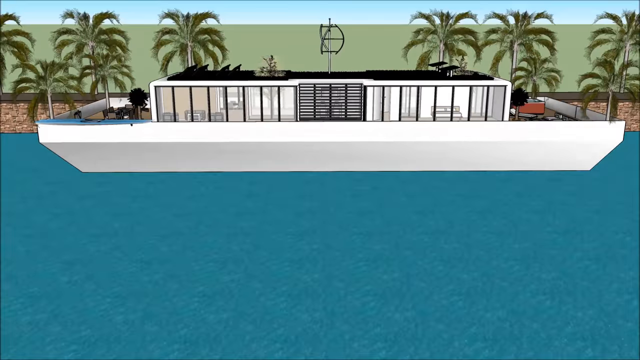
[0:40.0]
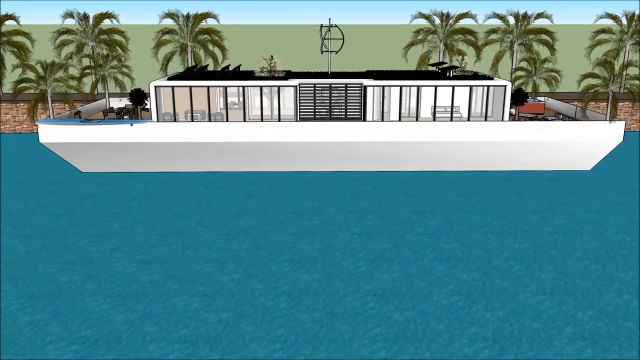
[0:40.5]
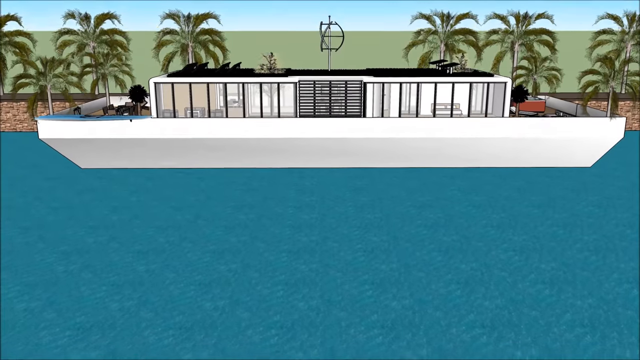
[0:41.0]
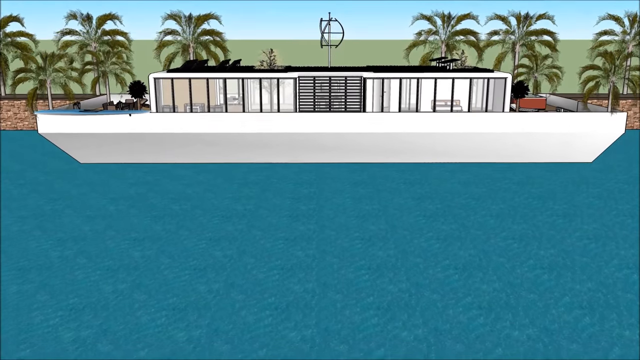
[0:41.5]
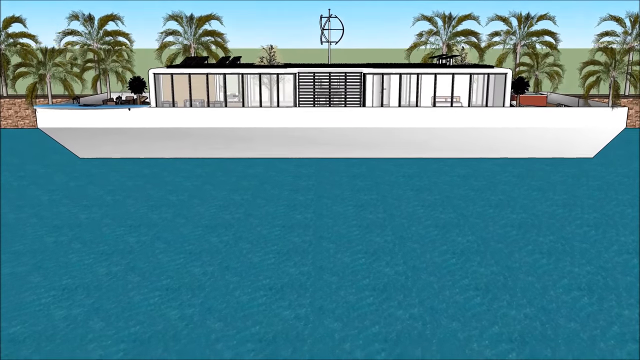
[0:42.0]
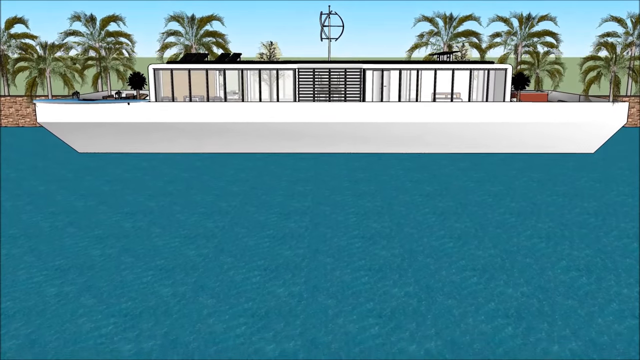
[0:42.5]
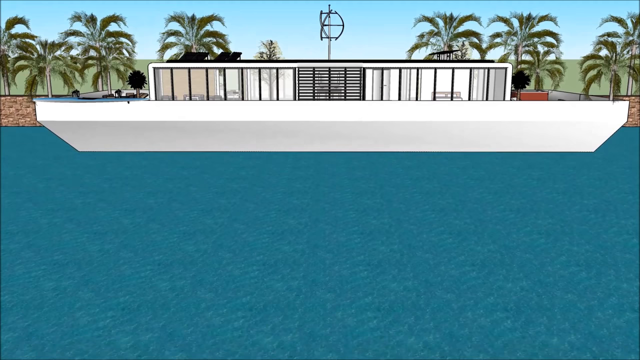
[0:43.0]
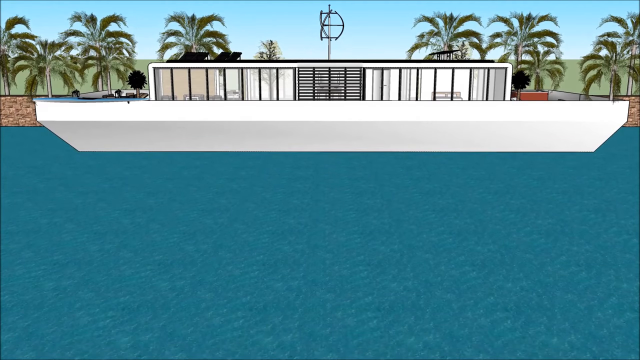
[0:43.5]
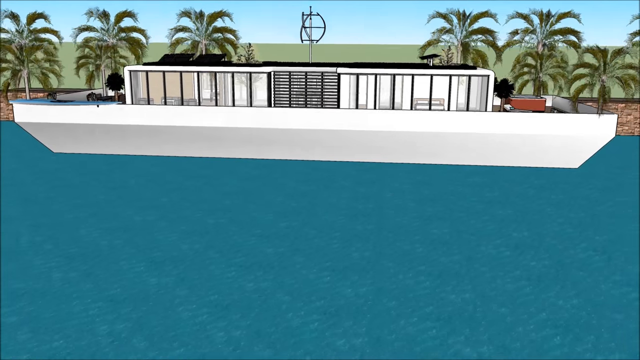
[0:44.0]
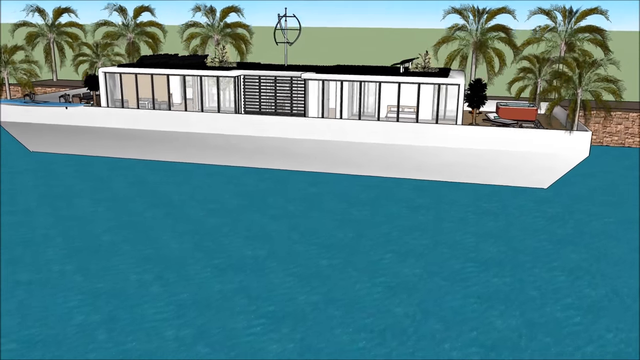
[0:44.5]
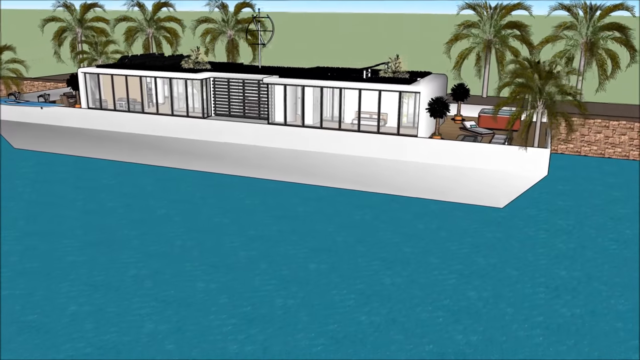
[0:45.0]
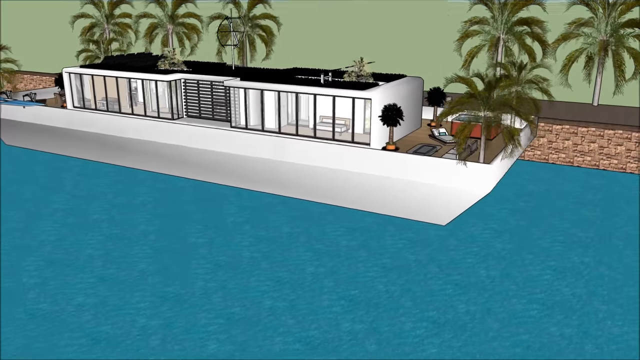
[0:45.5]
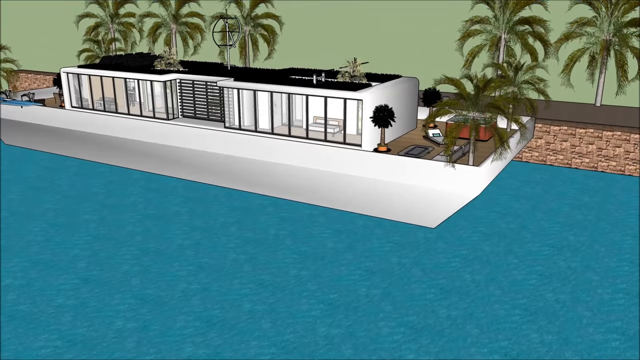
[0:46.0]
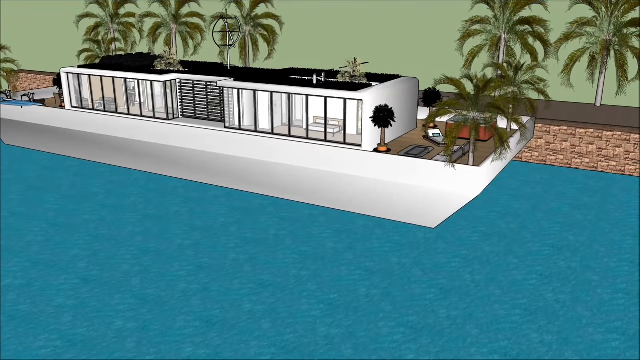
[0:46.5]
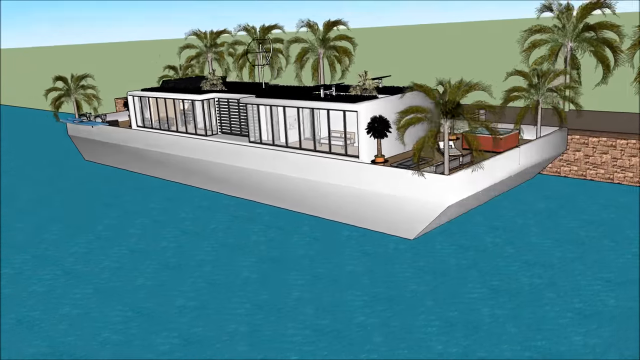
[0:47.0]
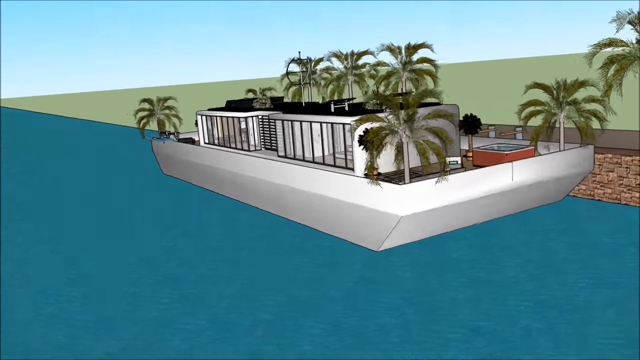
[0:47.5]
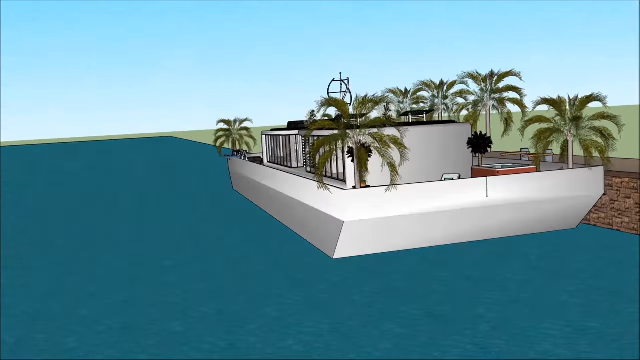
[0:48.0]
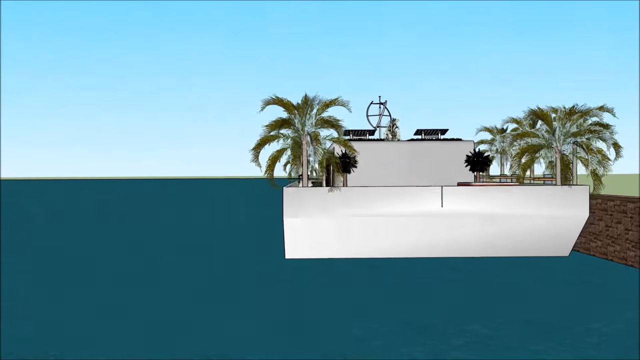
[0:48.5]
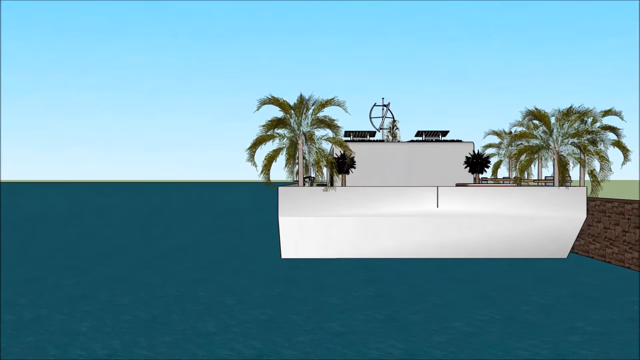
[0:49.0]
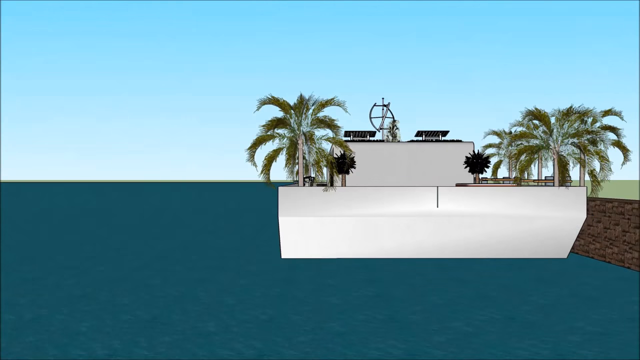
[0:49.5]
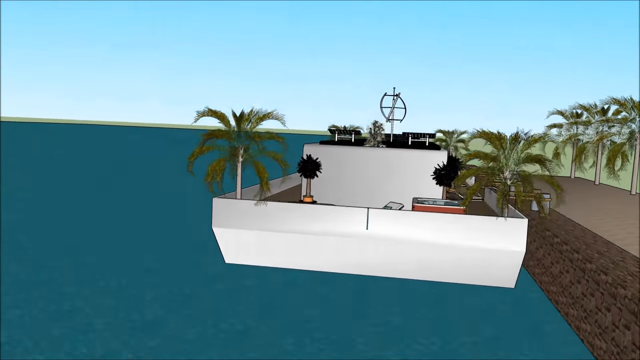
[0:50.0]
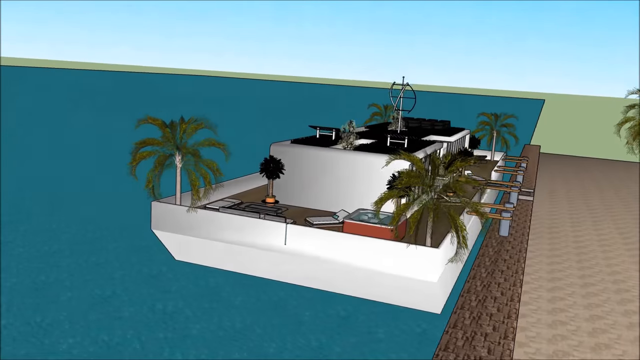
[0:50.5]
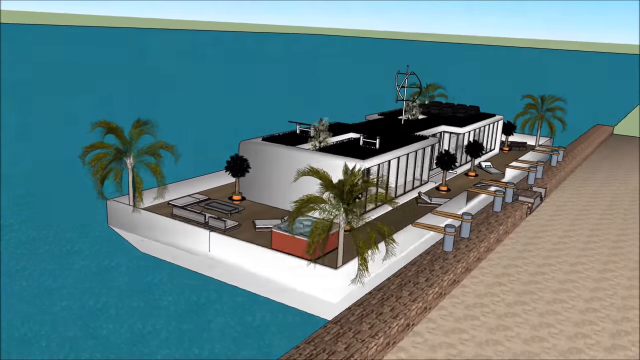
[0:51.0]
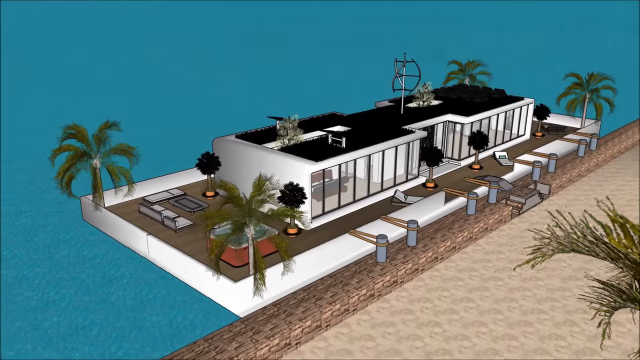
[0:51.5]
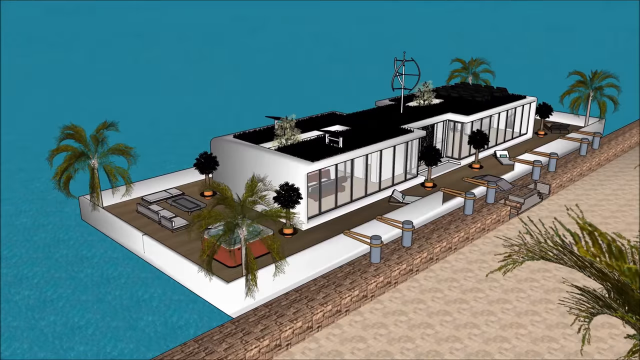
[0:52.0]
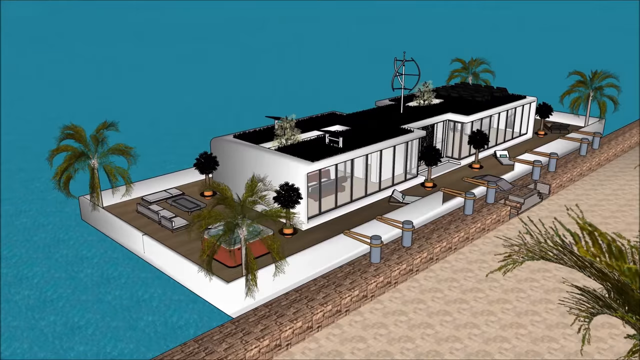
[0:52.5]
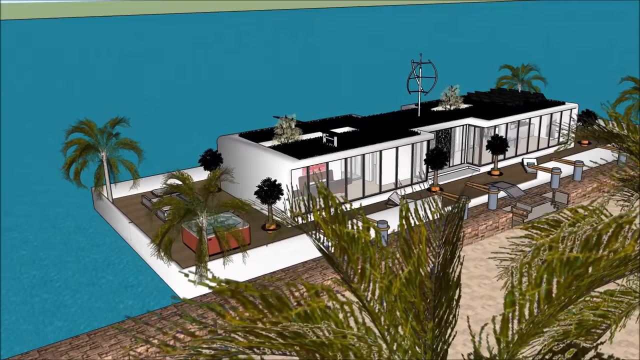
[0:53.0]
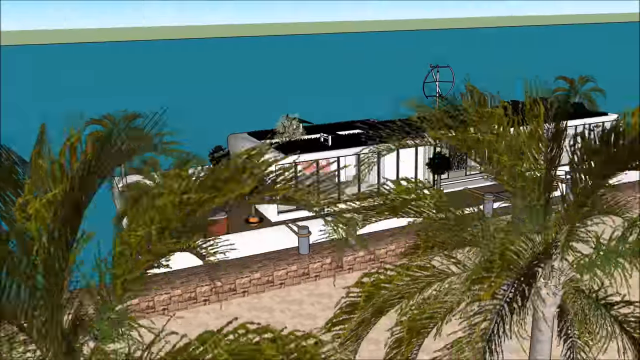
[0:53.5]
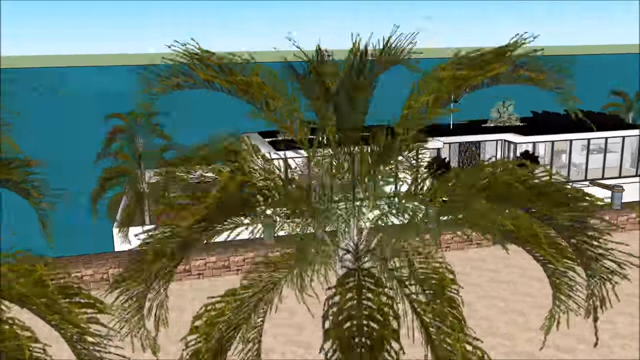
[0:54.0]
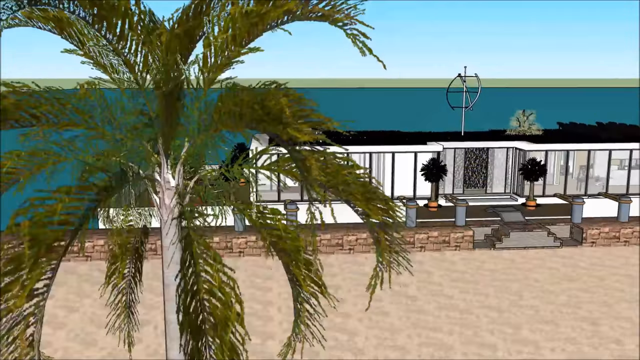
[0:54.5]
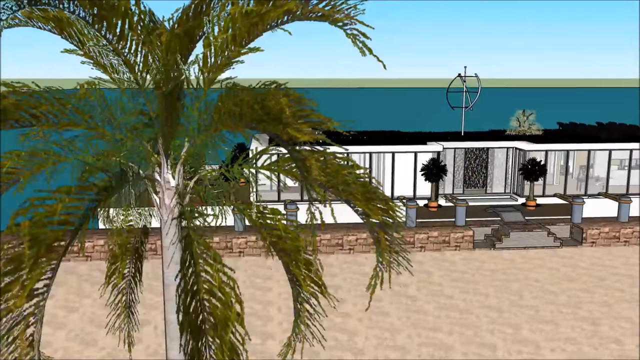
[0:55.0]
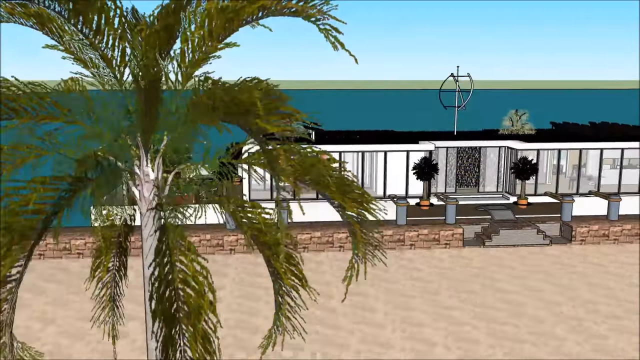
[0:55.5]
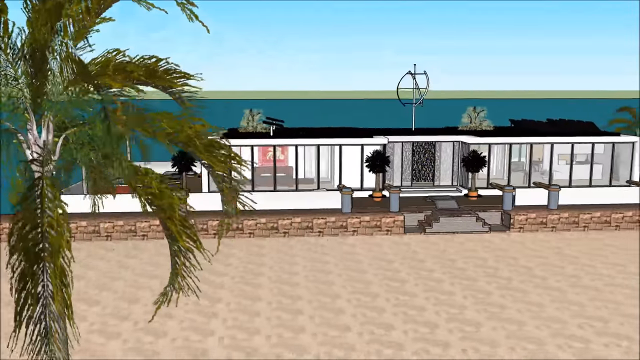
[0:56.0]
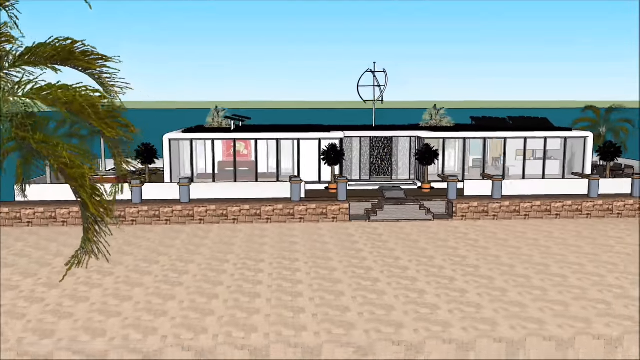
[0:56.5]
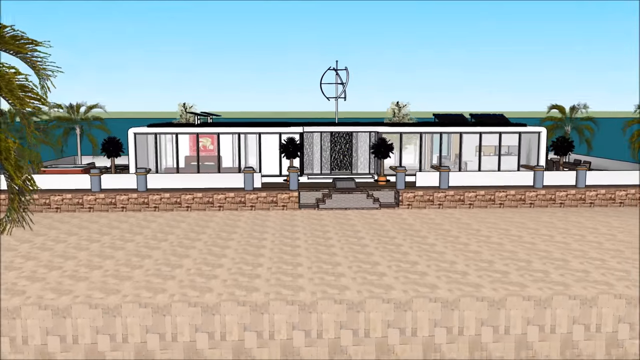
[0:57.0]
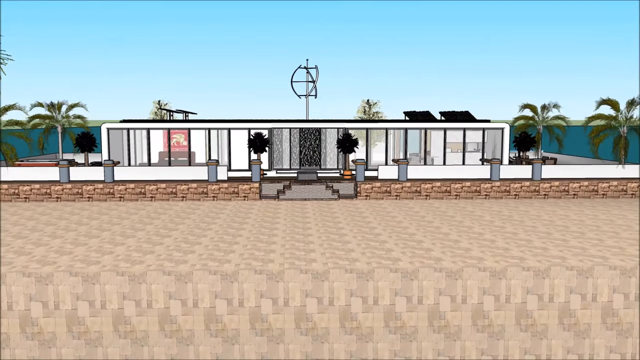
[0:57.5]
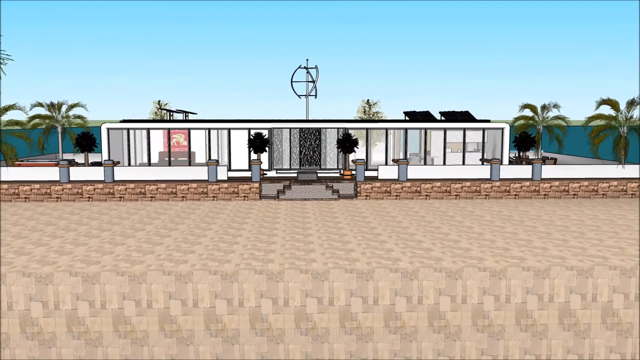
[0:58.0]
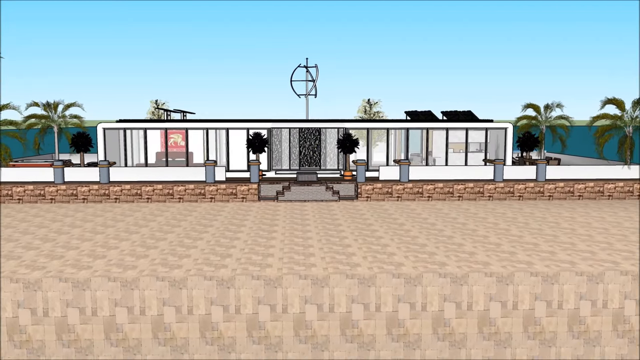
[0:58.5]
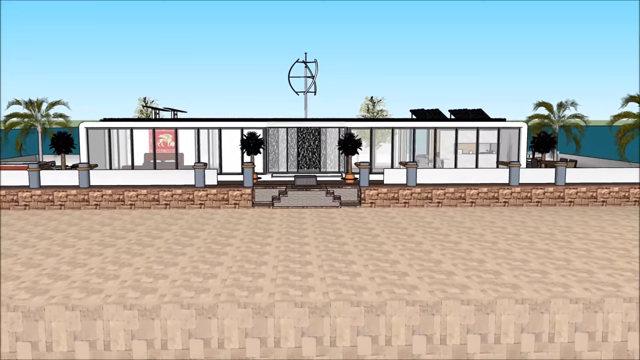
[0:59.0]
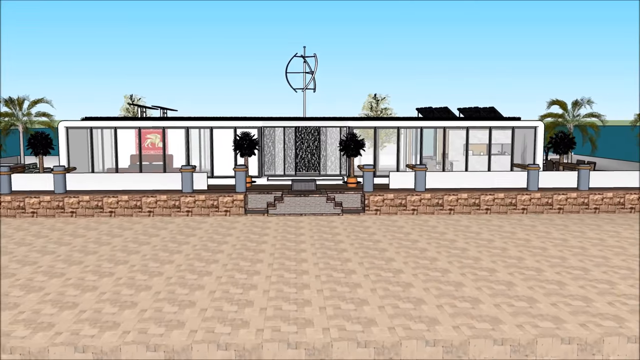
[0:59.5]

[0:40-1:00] What looks to be a beach house has a very large body of water around it. It is mostly white, with a variety of window panes throughout and a black-lined gate in the center. Many palm trees surround it, along with a lot of green land. The camera slowly moves down to show the thickness of the property, then moves to the side, showing palm trees and a spa kind of like a jacuzzi, more trees on the house, and some areas to lie down and relax. It moves to another angle, covering the different angles. Some stuff on the roof kind of goes up toward the sky. The camera moves toward a close-up of the palm tree and more areas of the house, then moves back, showing brown on the ground that kind of looks like maybe sand, before it zooms in.